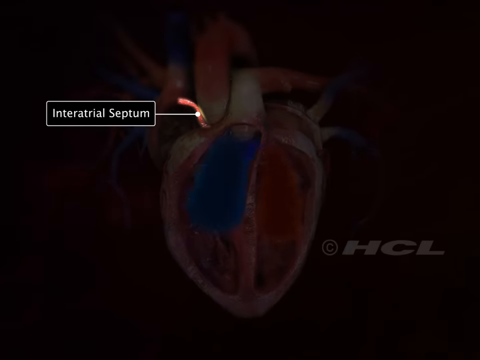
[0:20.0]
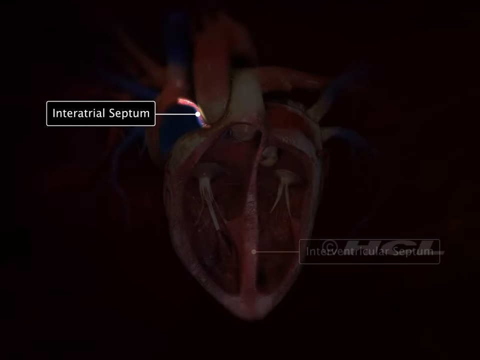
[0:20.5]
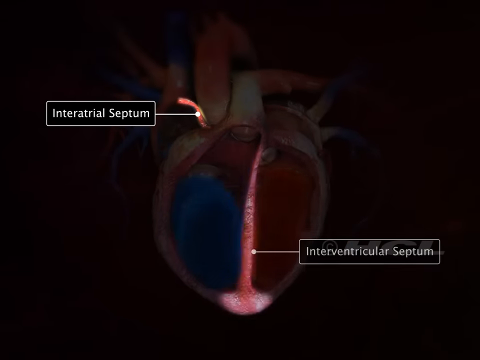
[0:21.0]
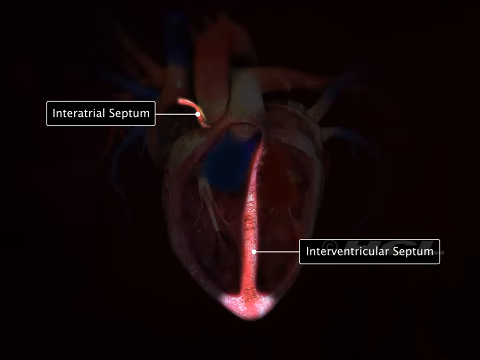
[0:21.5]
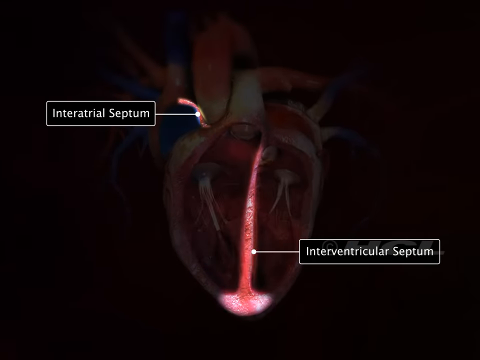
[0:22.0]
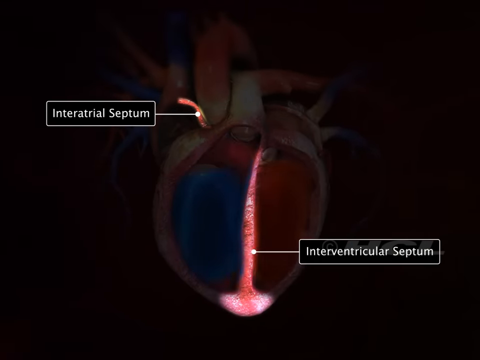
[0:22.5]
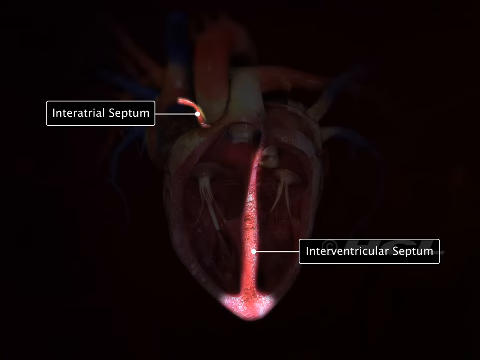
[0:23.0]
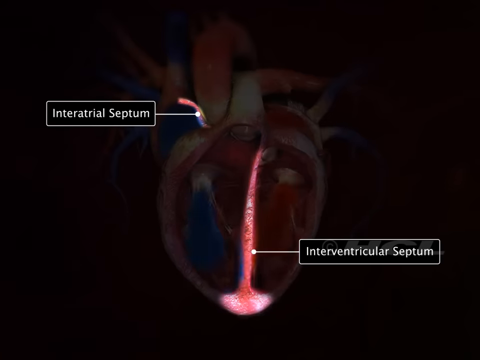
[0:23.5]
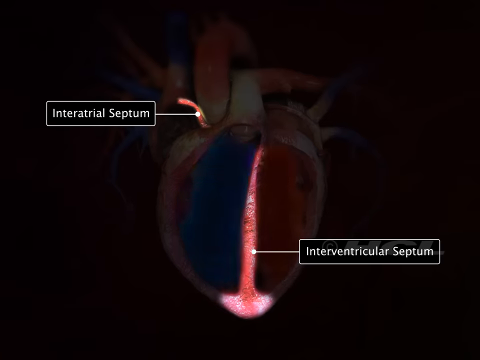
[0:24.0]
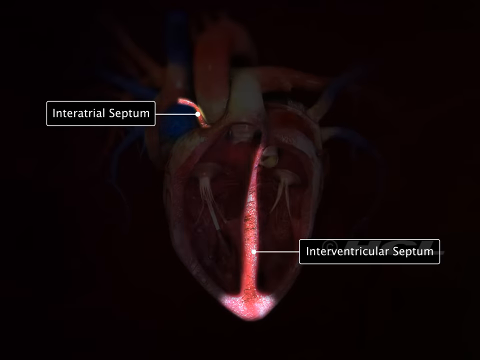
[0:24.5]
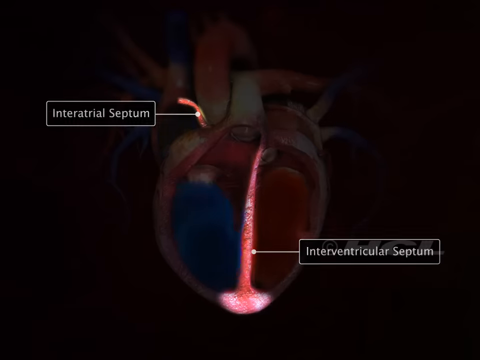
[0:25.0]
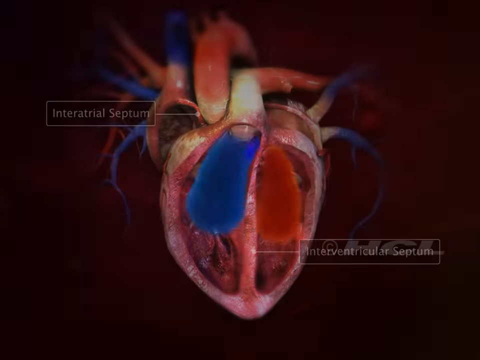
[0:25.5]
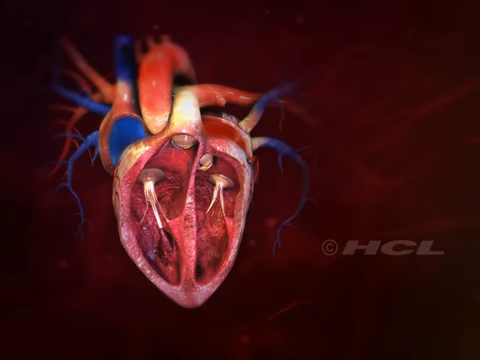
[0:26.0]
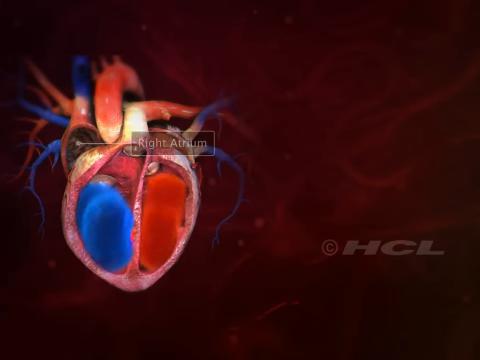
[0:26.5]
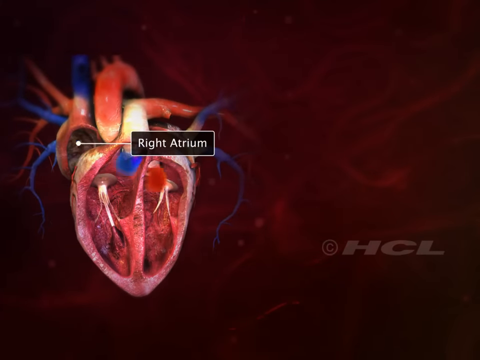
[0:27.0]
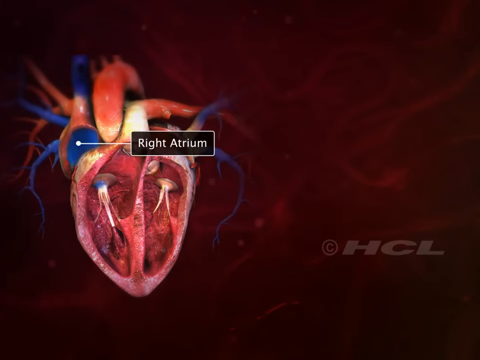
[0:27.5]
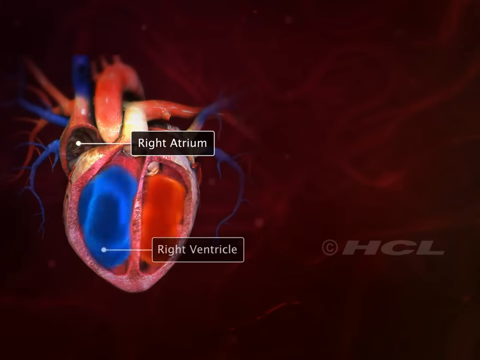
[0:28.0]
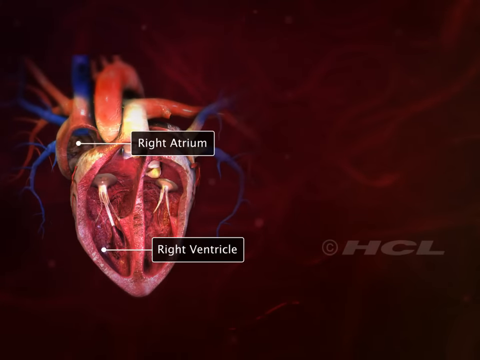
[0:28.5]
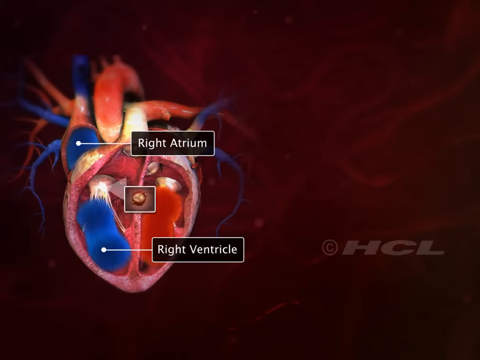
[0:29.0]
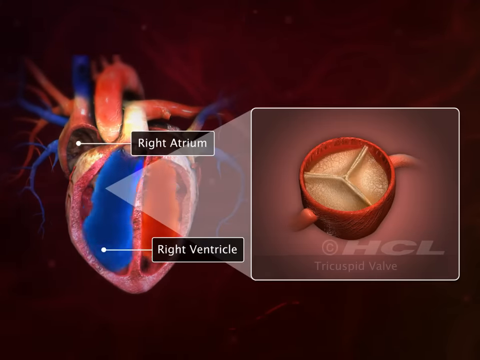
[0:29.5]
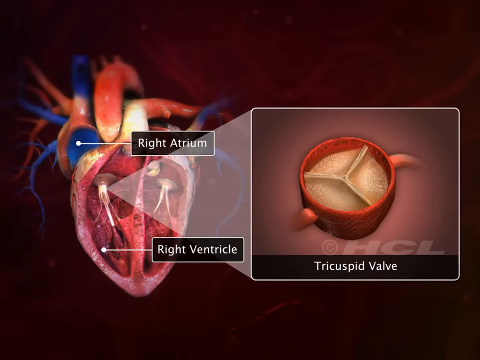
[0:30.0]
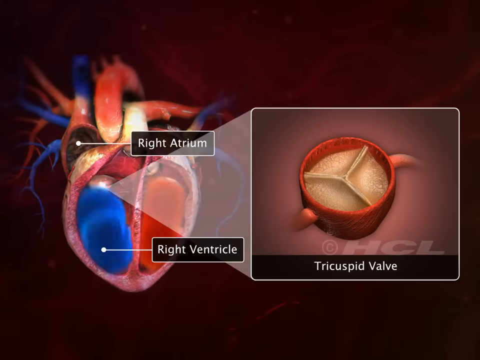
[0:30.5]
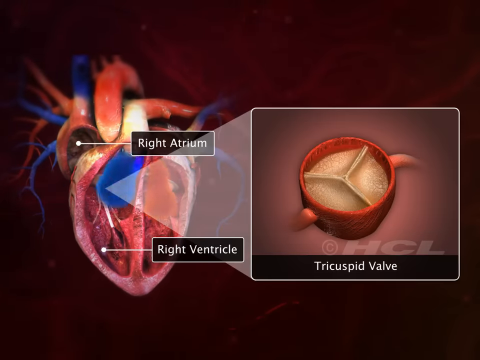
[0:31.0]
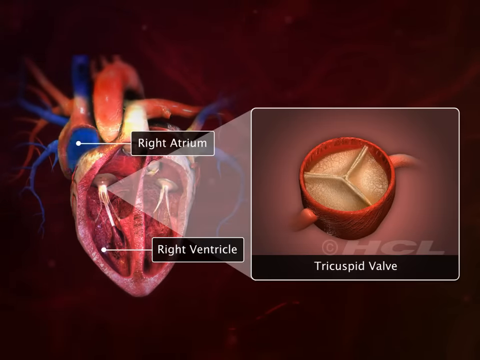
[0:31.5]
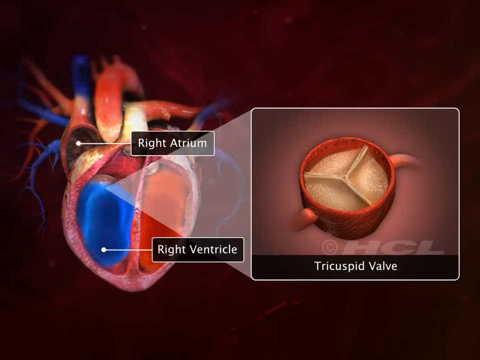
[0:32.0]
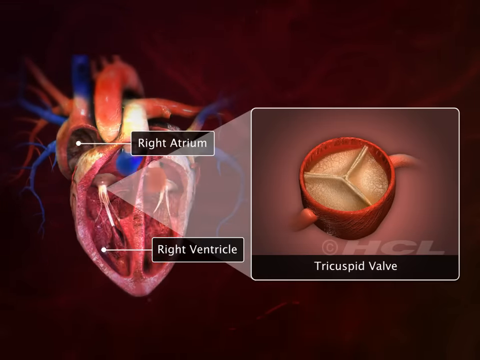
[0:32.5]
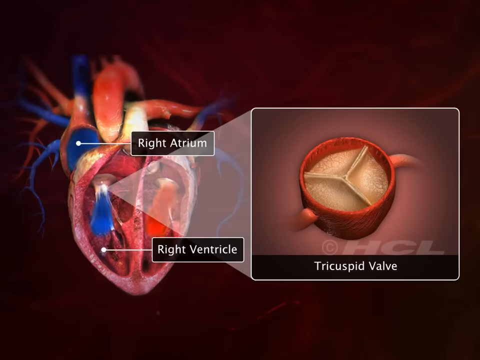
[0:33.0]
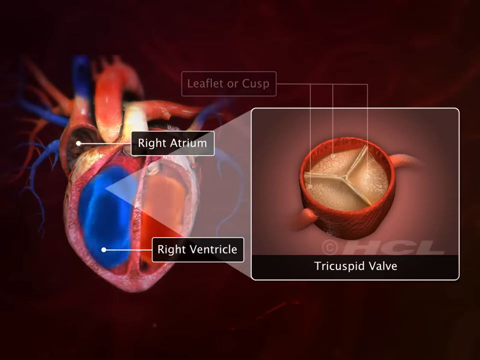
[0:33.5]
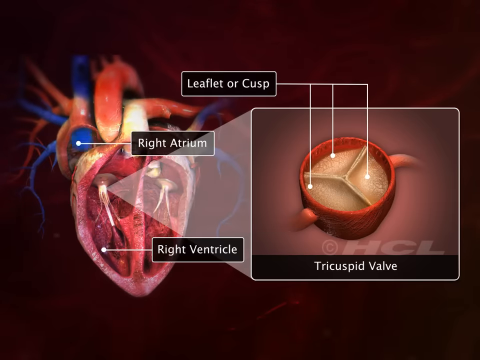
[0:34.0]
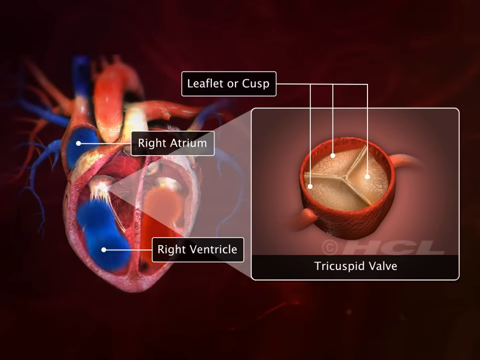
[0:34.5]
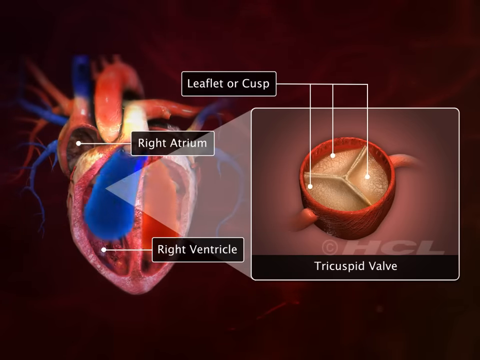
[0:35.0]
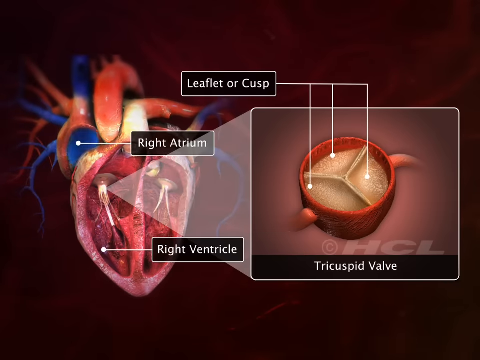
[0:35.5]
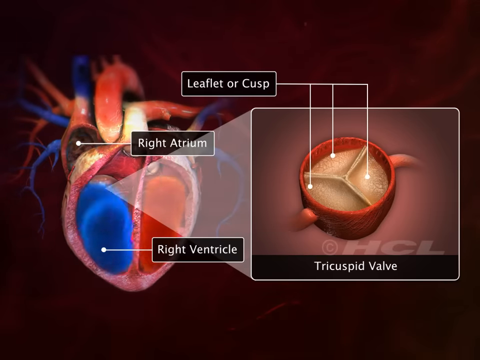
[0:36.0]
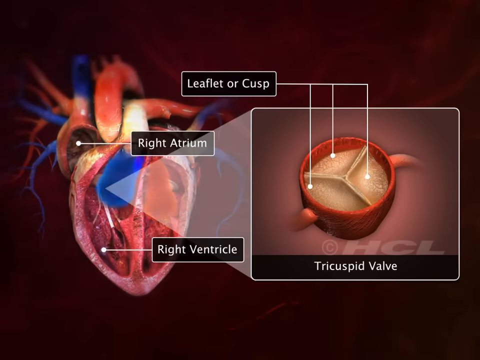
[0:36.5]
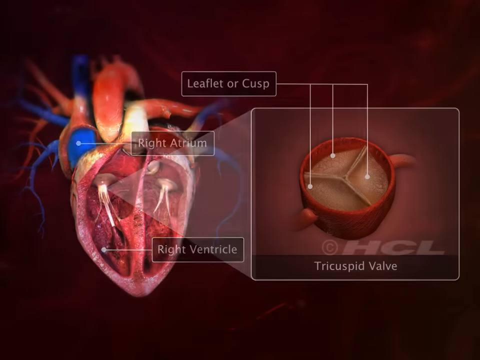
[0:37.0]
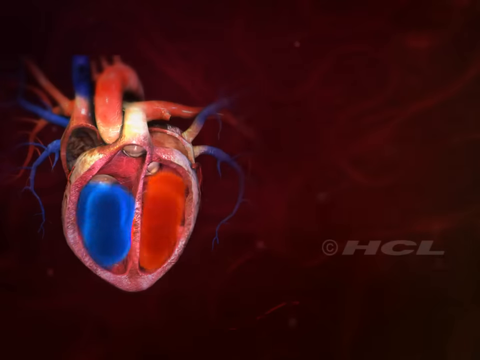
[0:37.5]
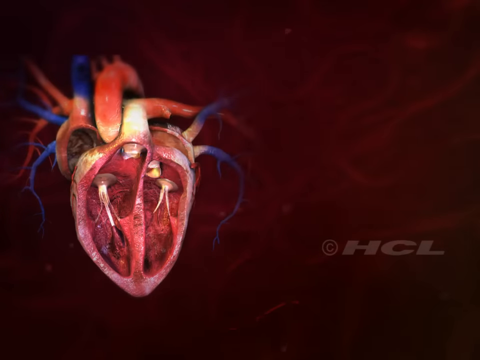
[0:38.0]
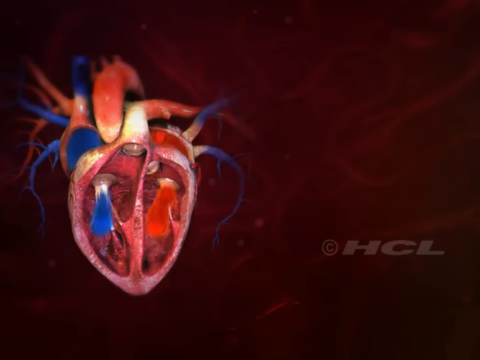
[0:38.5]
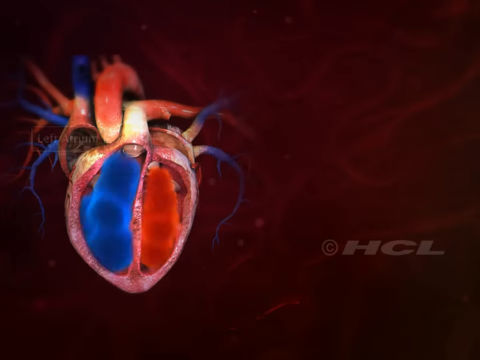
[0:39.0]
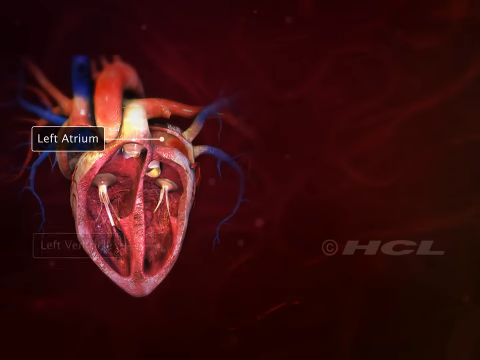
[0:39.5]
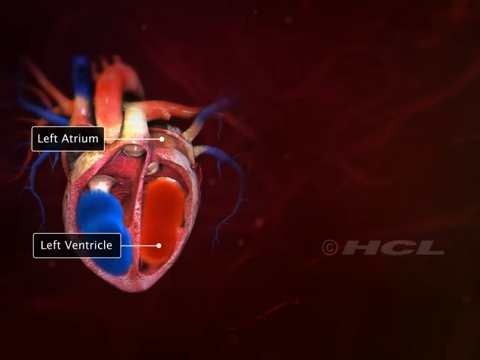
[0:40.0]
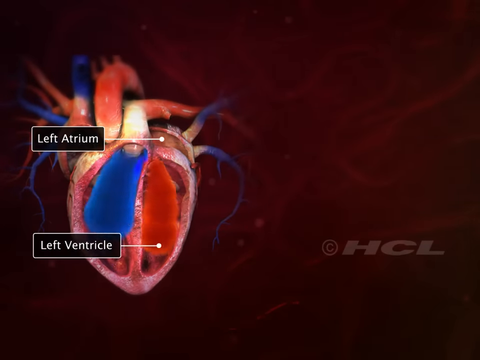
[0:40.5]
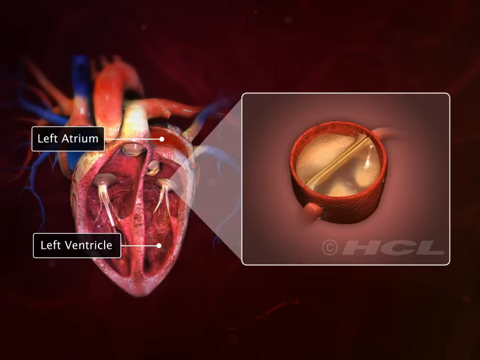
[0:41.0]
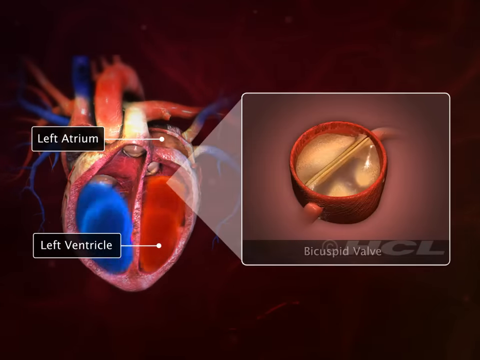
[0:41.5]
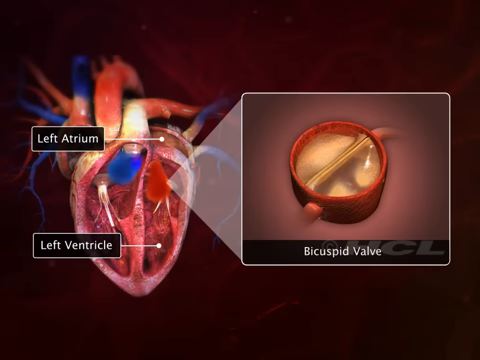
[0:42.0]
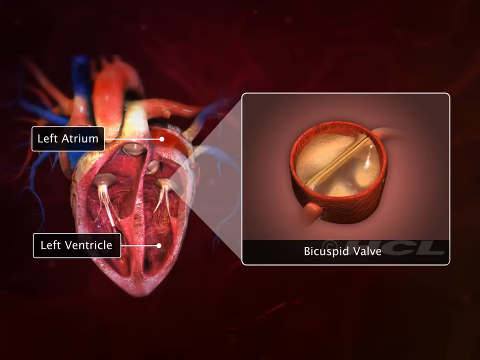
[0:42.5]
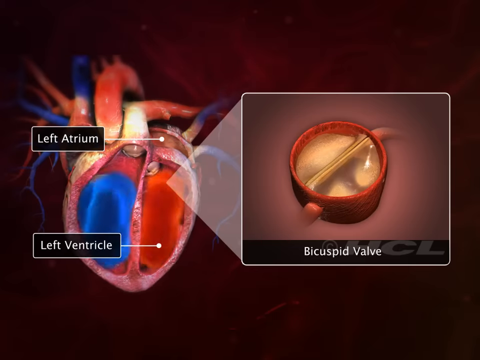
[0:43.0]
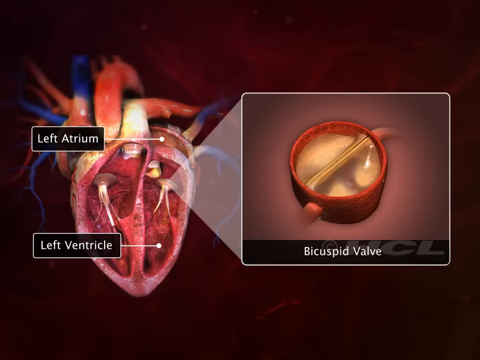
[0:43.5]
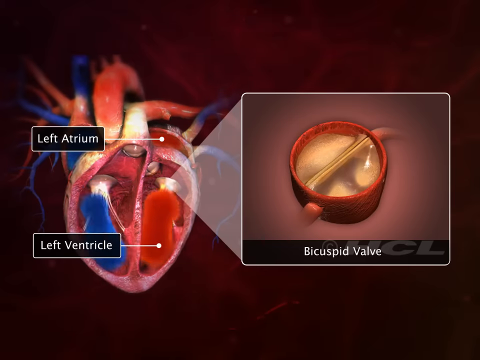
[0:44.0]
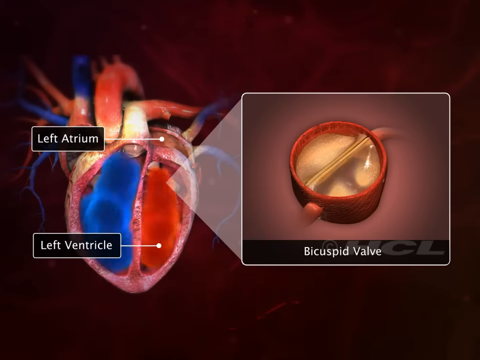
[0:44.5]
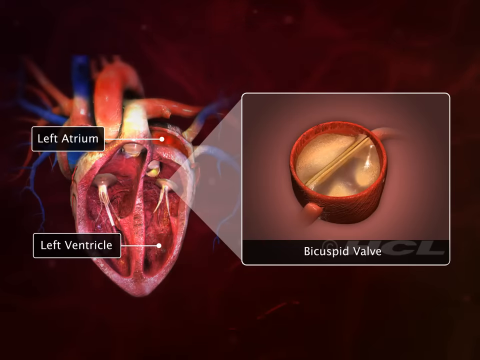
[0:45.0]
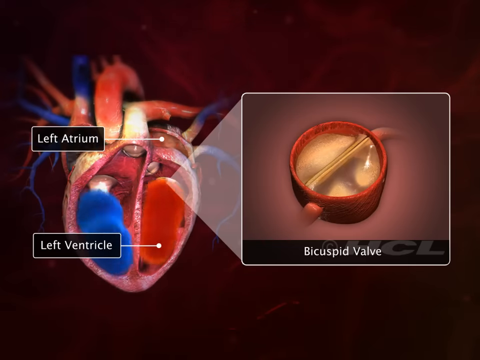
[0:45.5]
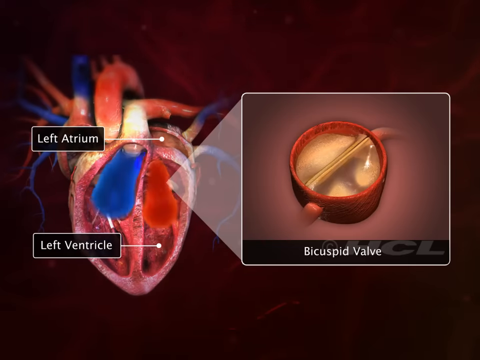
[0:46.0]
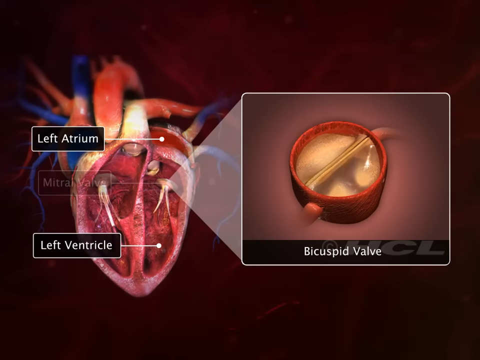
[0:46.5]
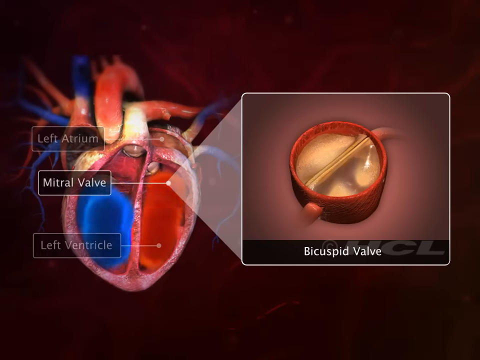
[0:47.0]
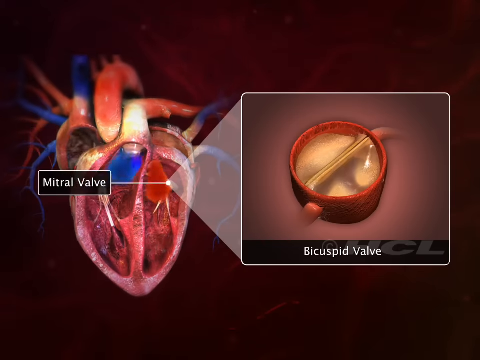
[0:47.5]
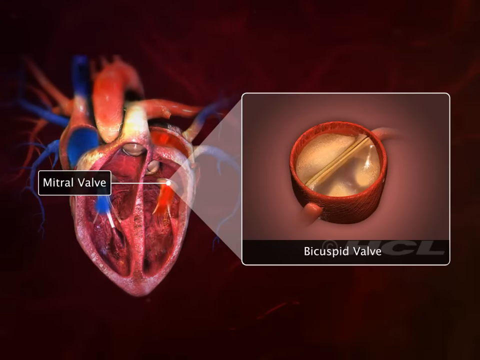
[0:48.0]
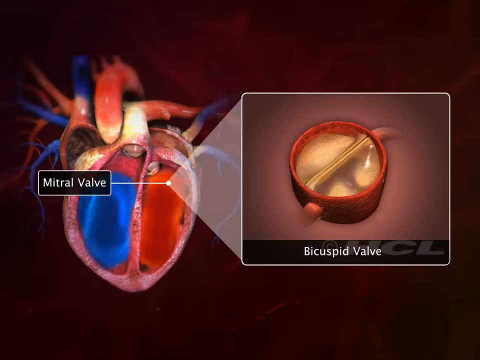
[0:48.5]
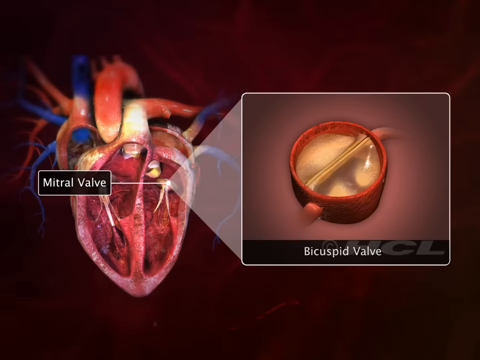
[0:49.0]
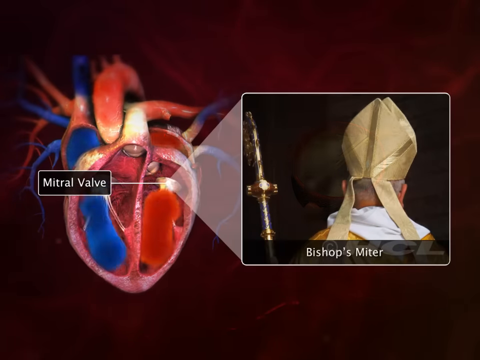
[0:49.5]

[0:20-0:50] On a dark screen, a faint human heart is shown cut open, with some of the liquids inside it and a lot of tubing connected to it. A dot with a line leads to a rectangle reading "interatrial septum," and the interatrial septum is highlighted so it is not in darkness like the rest of the image. Another part of the heart becomes highlighted in bright light, with another dot, line and rectangle reading "interventricular septum." Then the whole heart is highlighted and visible. The heart shifts to the left, and a dot with a line and a rectangle reading "right atrium" points to the right atrium; another label points to the right ventricle. A light shines out of a portion of the right ventricle, and a rectangle on screen shows a small bowl-like object with something inside that looks kind of like a propeller with a triangular shape, with "tricuspid valve" written underneath. Meanwhile the heart keeps beating, with blue and red liquid moving up and down in it. Arrows point to different places in the tricuspid valve and connect to a rectangle reading "leaflet or cusp." That disappears and the heart beats some more. The left atrium and left ventricle are shown, then a highlighted rectangle reading "bicuspid valve" stays on screen for a while, followed briefly by an image of a bishop.